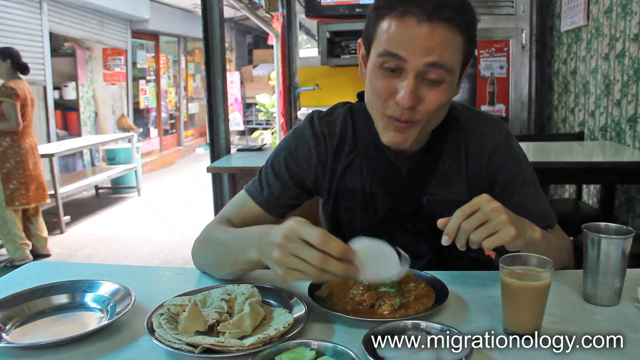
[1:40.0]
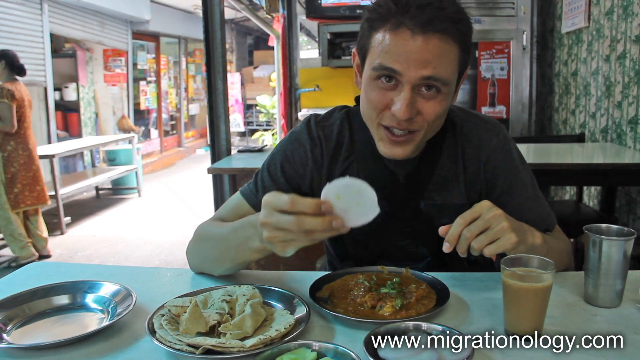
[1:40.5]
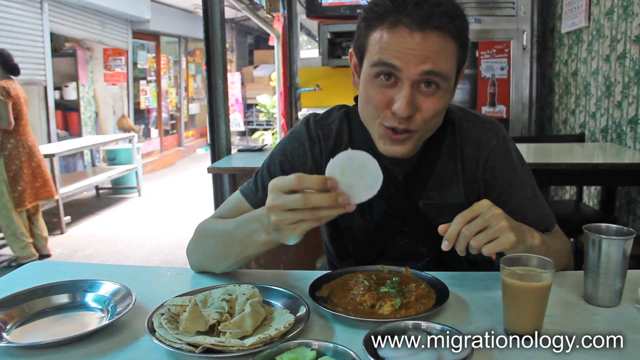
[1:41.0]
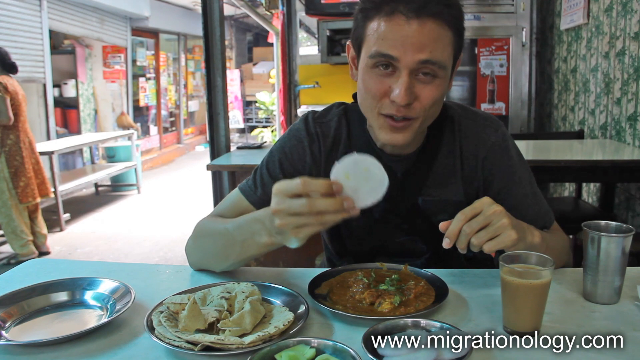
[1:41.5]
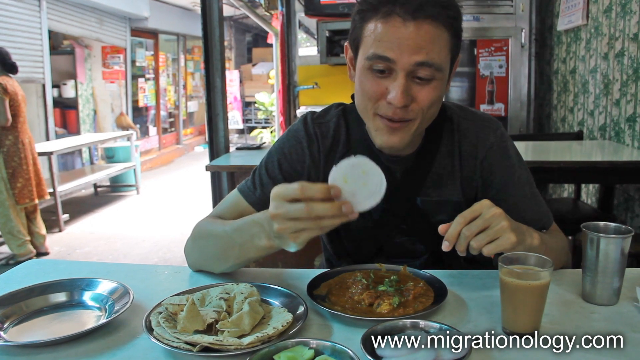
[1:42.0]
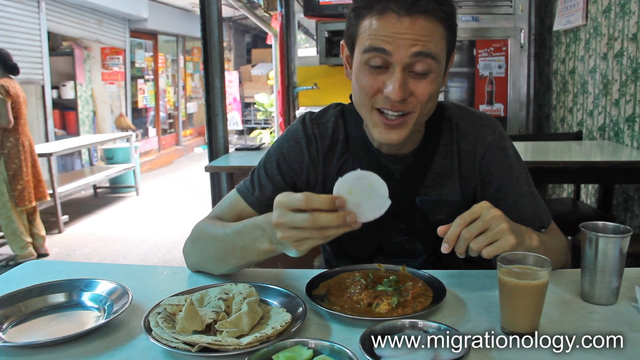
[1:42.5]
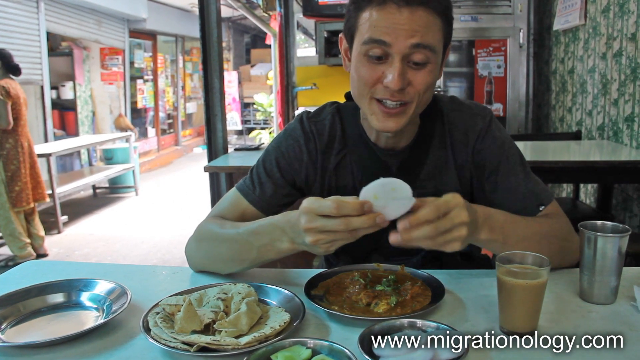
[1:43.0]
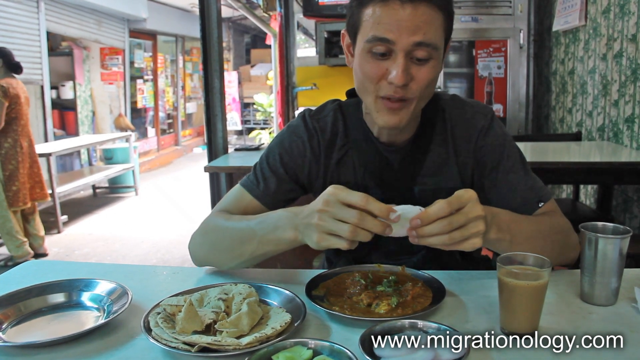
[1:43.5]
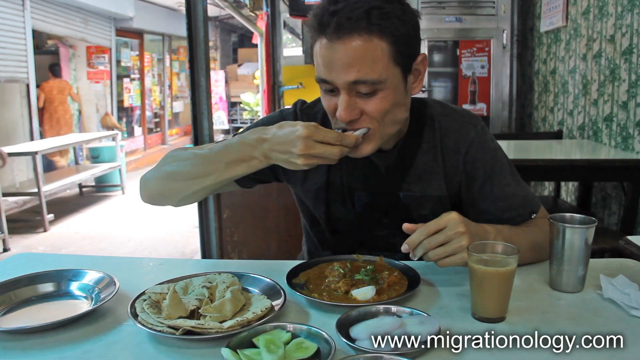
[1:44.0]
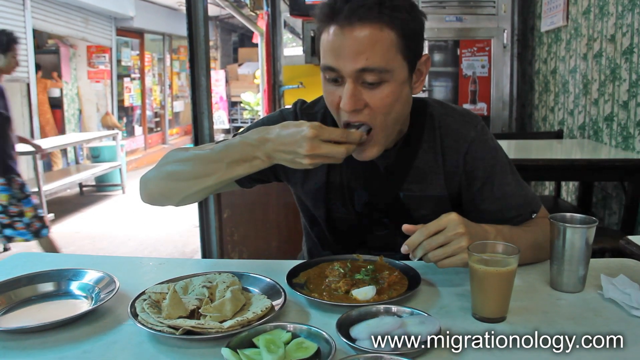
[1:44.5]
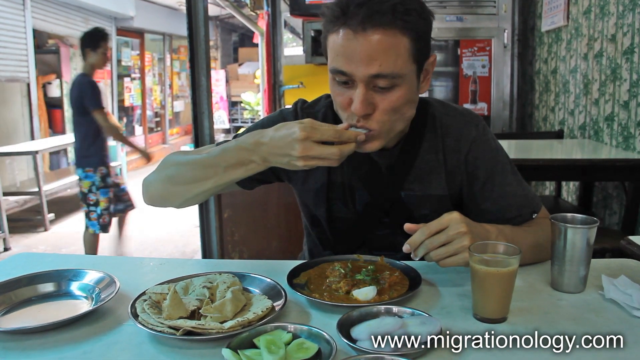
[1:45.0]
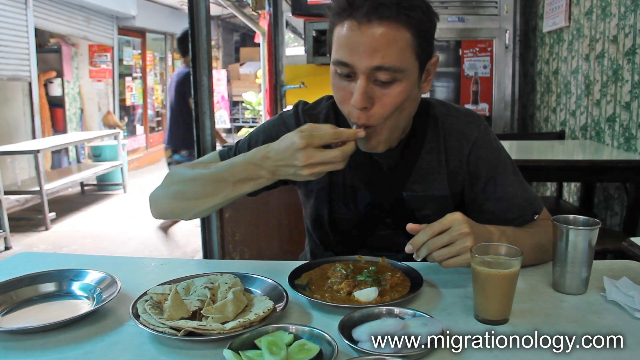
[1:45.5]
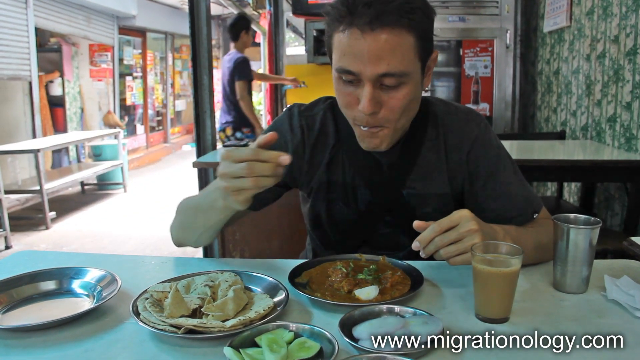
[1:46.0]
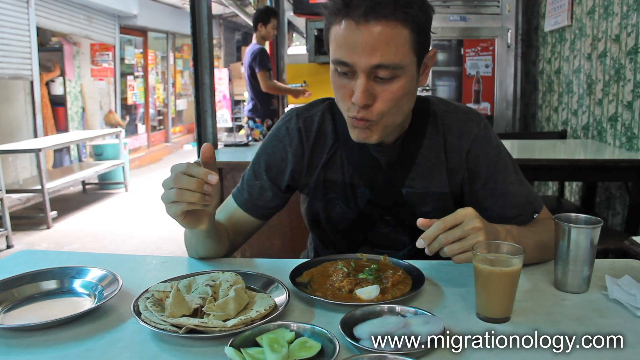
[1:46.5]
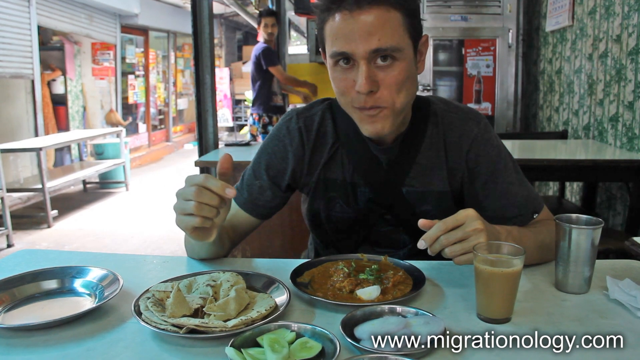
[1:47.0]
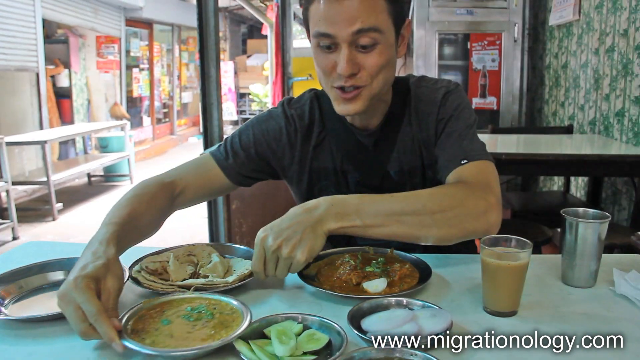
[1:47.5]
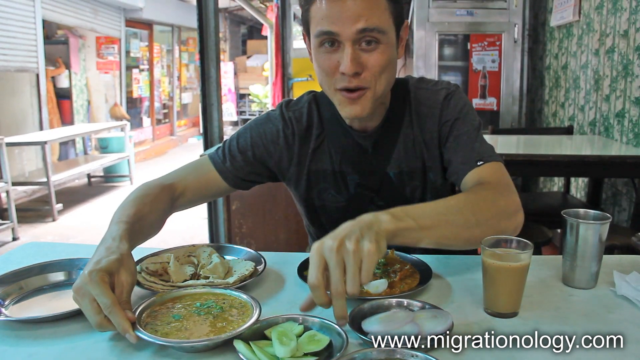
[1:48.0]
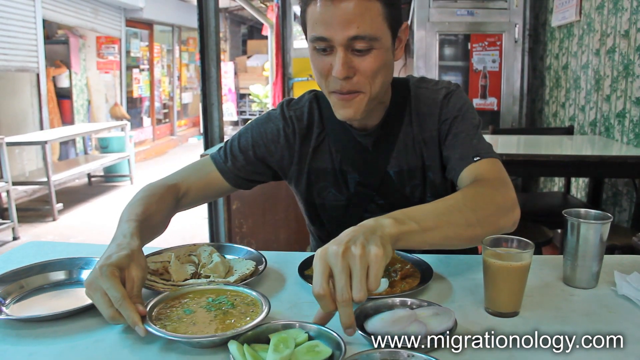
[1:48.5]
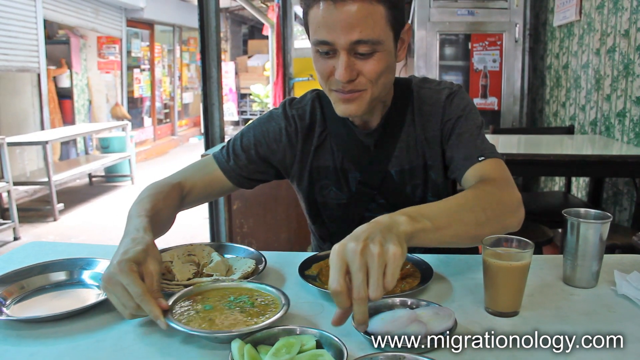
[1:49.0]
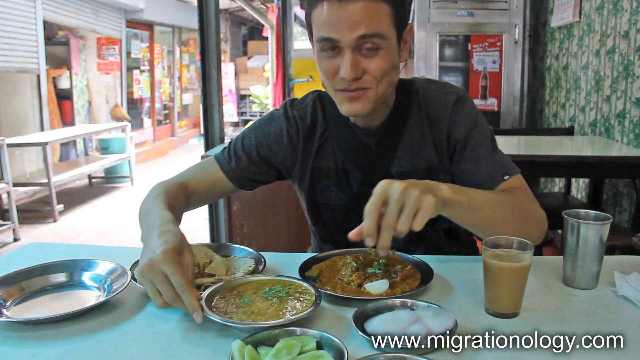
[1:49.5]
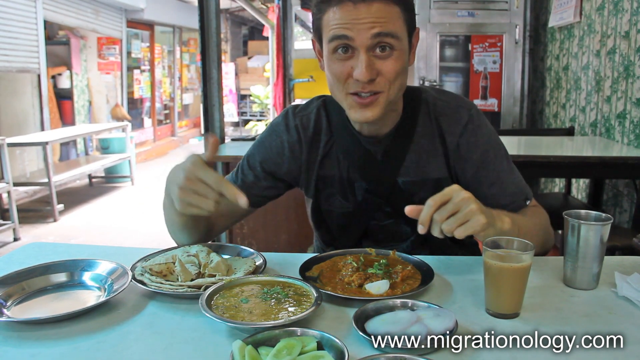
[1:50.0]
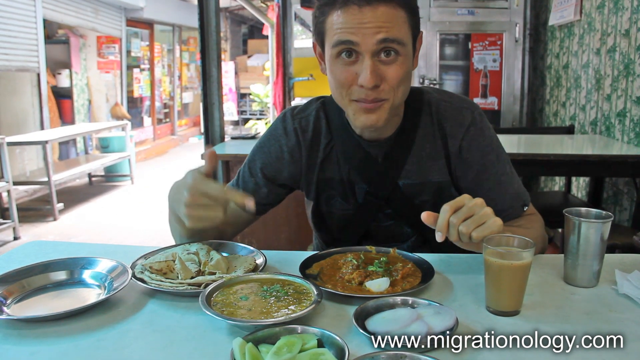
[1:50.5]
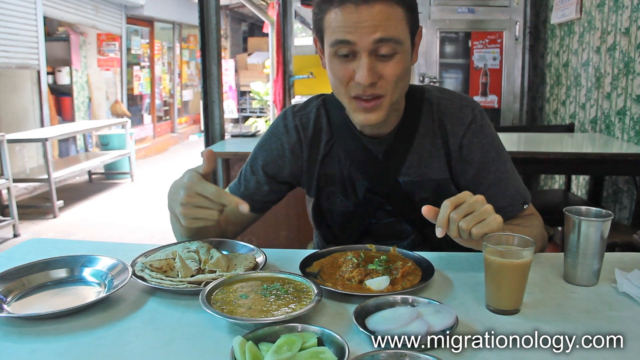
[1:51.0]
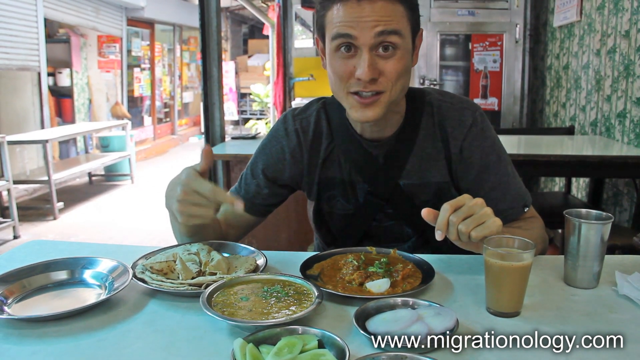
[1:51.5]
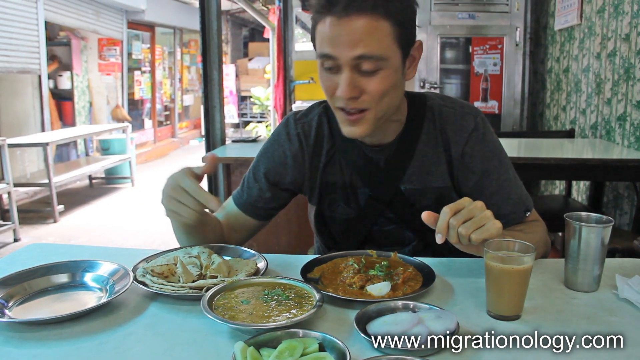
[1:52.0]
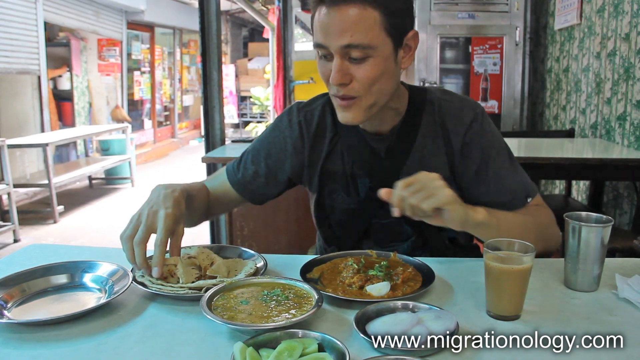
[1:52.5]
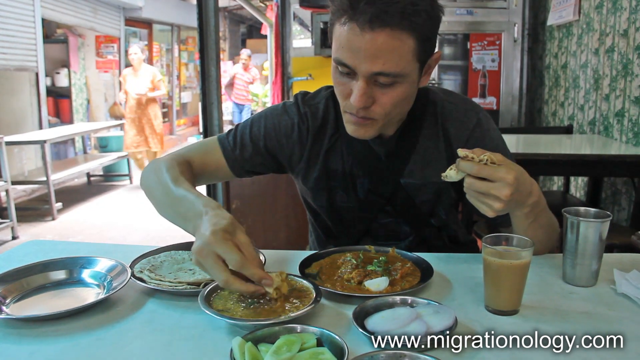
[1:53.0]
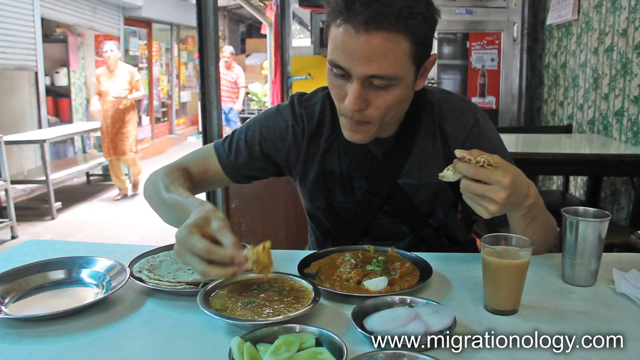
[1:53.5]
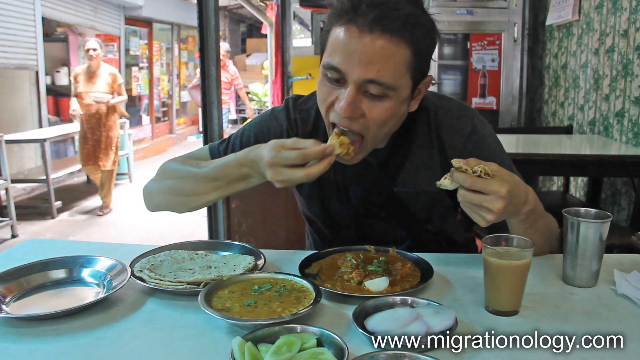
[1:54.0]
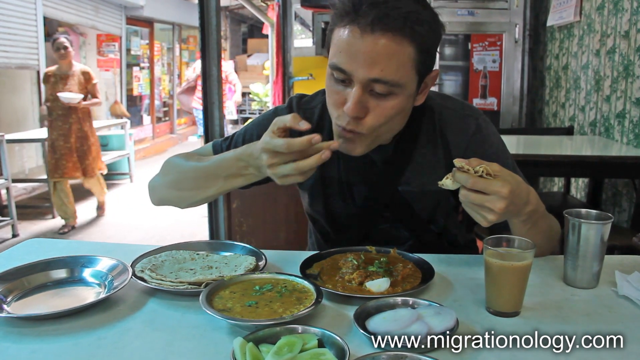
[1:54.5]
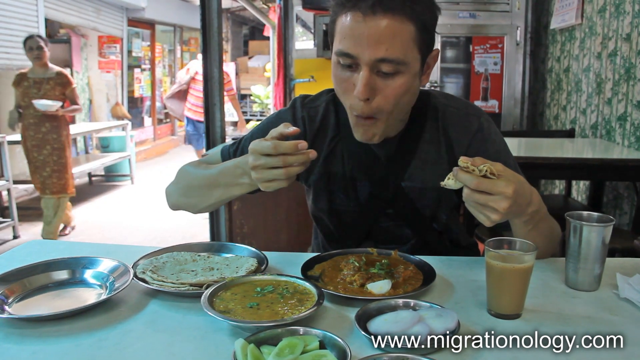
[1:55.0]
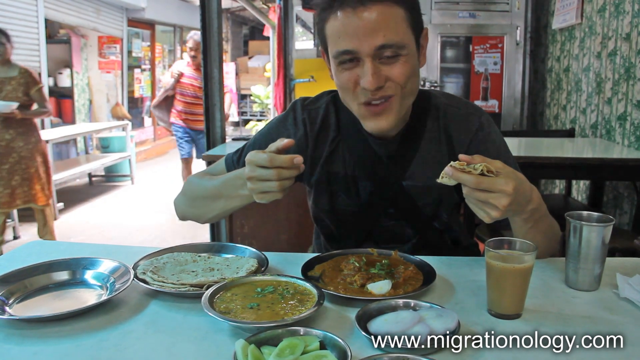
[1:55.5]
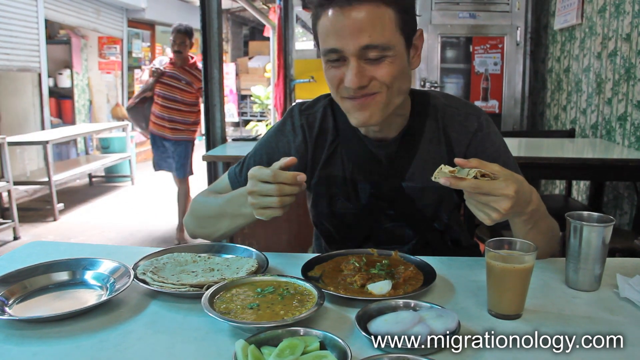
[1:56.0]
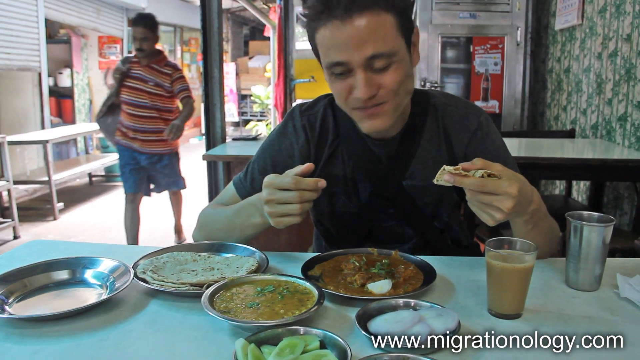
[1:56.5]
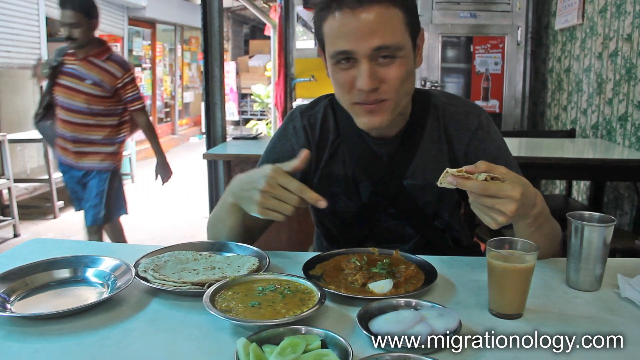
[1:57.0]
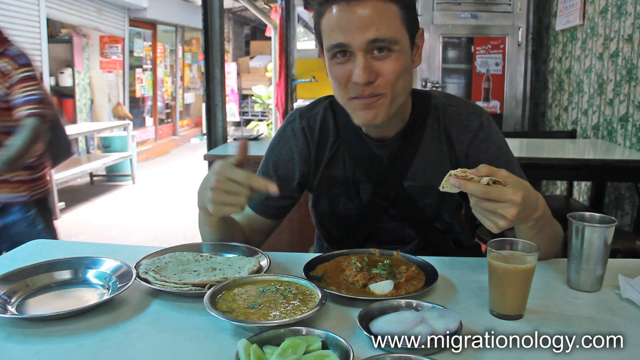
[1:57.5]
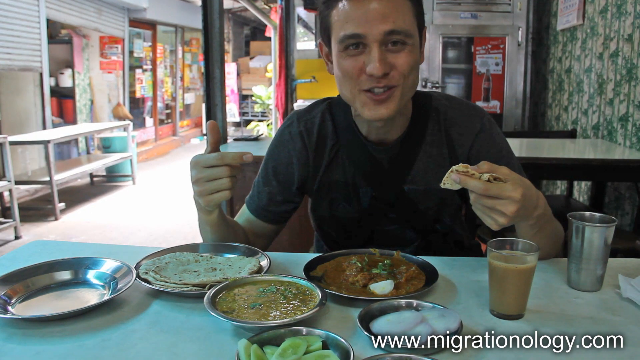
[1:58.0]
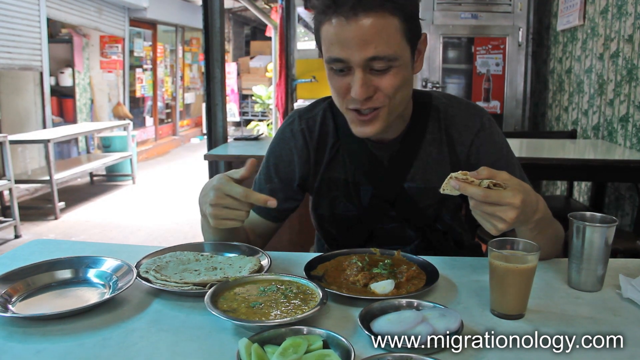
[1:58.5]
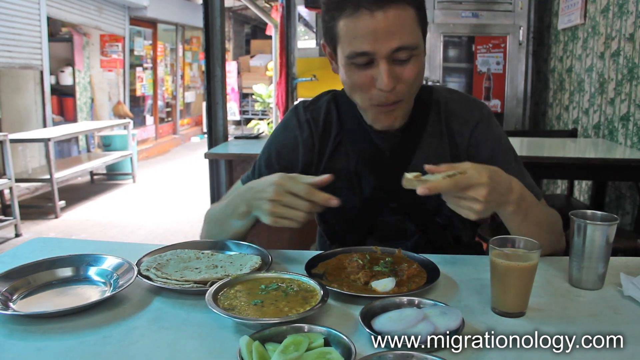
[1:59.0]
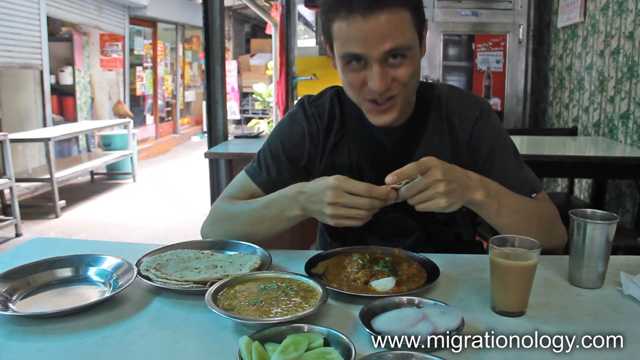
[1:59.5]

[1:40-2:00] The man throws a flat, onion-looking item directly into his mouth and eats it entirely; it may not be onion. After chewing, he scoots another soup closer to him, points at it, and dips his bread in, then again seems to affirm to the viewer that the food is good. He is very expressive with his eyes. He is eating at an outdoor restaurant, and several people walk in the background. The shot and setting never change; it shows only him eating.